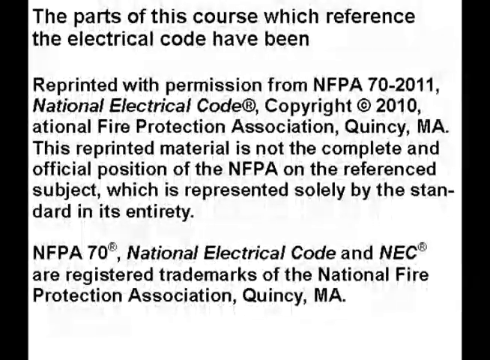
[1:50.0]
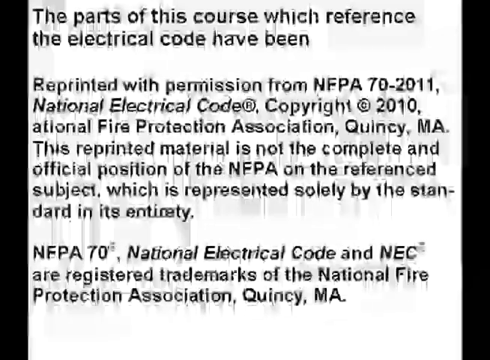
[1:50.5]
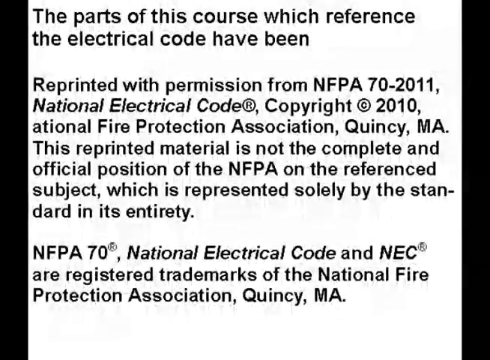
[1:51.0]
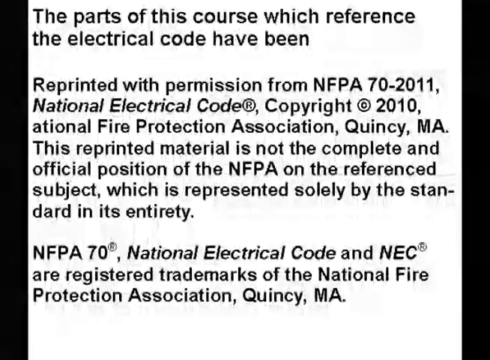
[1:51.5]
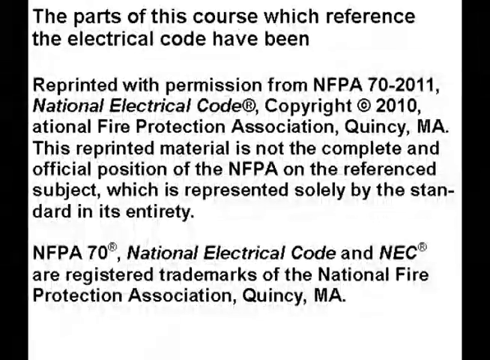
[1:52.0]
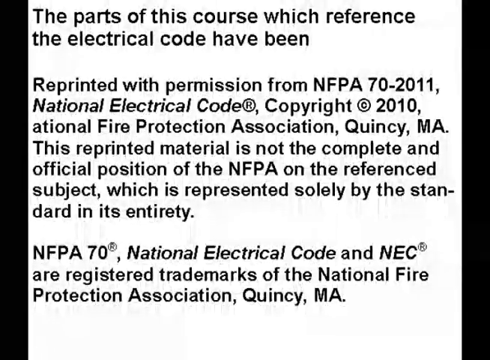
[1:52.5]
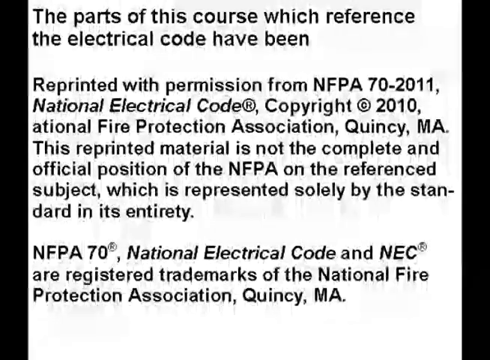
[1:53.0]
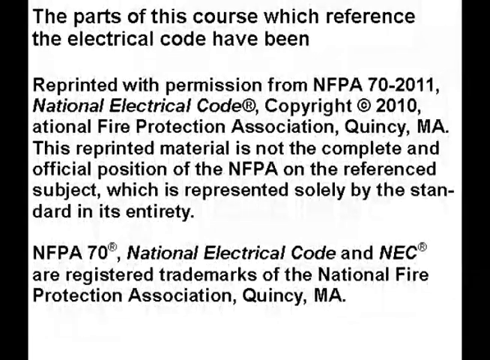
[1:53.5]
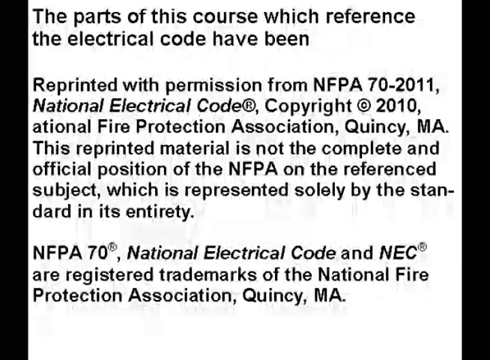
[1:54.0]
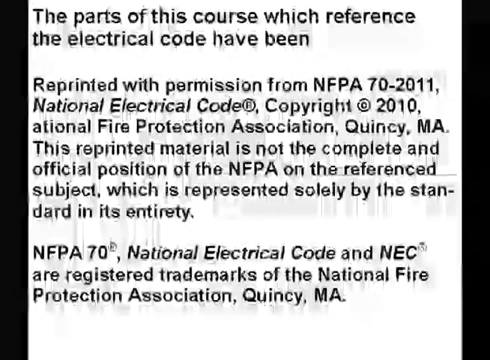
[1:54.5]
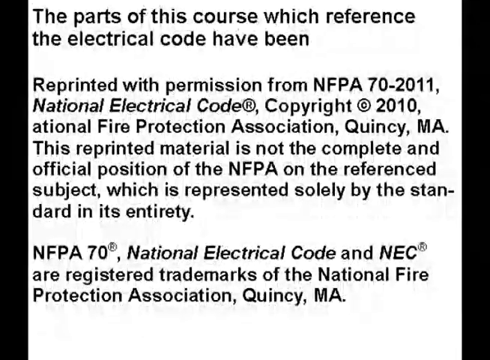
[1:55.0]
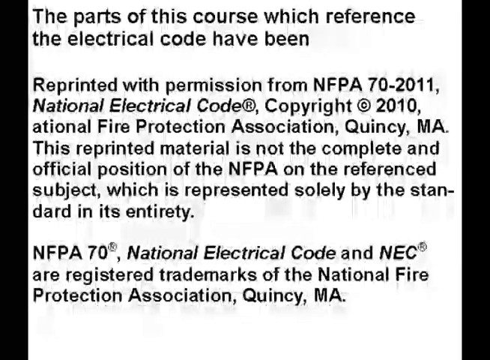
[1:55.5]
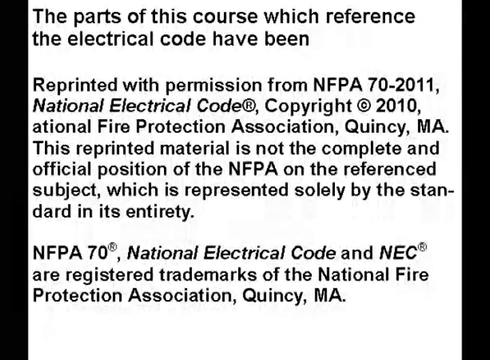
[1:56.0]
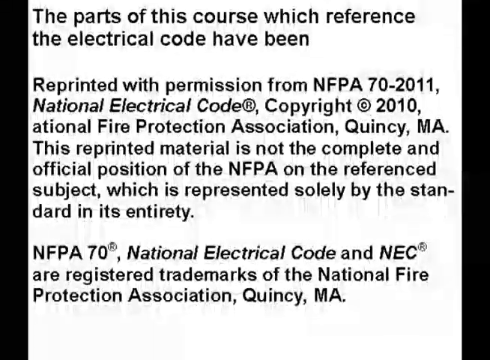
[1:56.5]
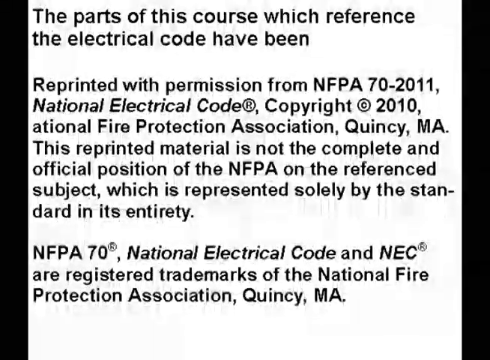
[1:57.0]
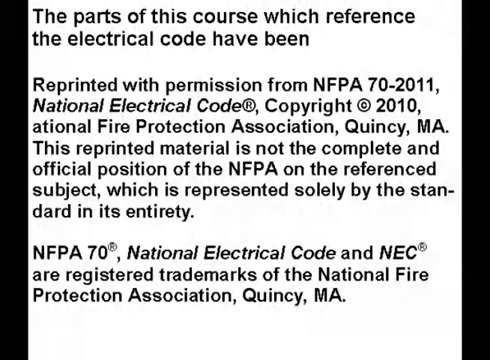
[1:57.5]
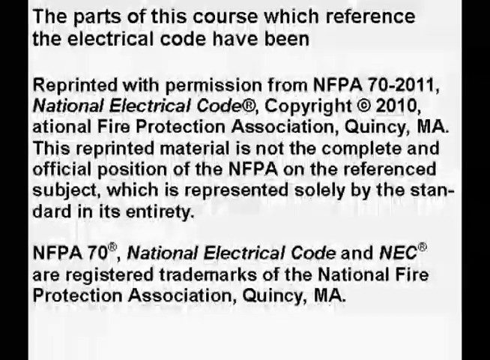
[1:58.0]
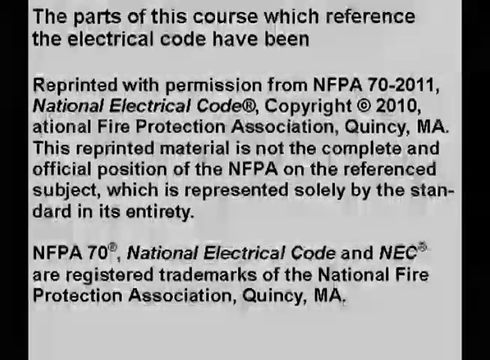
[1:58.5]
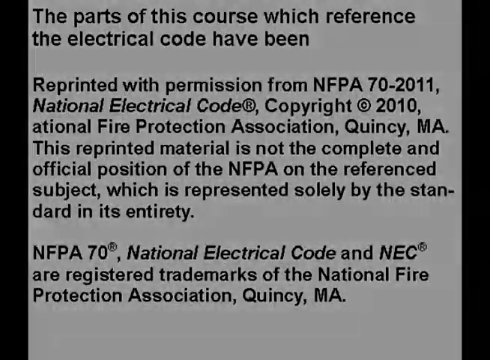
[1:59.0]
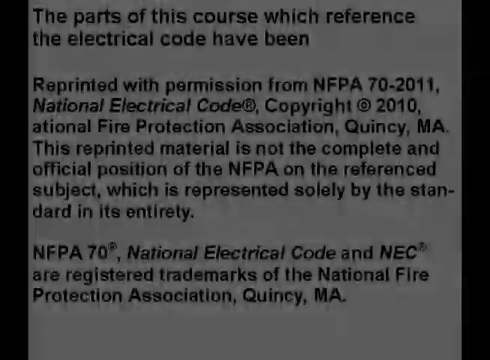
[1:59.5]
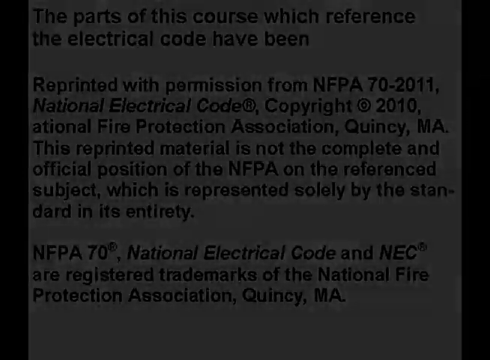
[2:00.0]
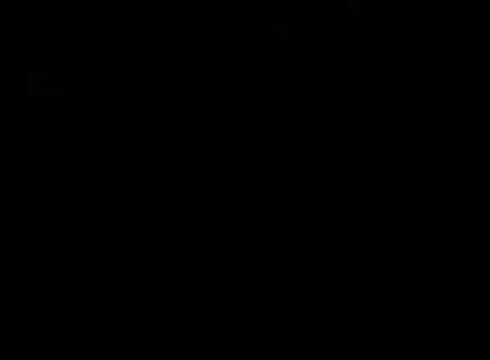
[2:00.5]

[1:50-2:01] Lines of black text on a white background state that parts of this course referring to the electrical code have been reprinted with permission from NFPA 70-2011, National Electrical Code, copyright 2010, National Fire Protection Association. The text continues "This reprinted material is not the complete and official position of NFPA on the reference subject, which is represented solely by the standard" and notes that NFPA 70 National Electrical Code and NEC are registered trademarks of the National Fire Protection Association. Black bars appear, and at times the text glitches.